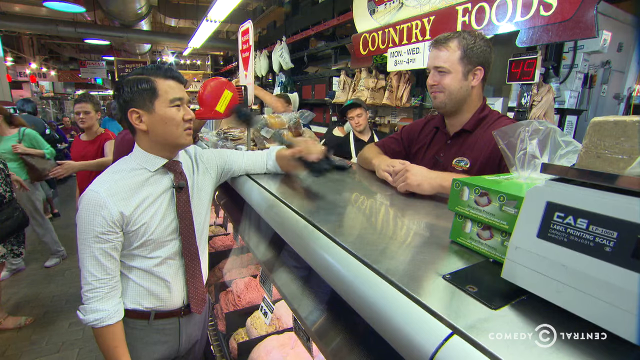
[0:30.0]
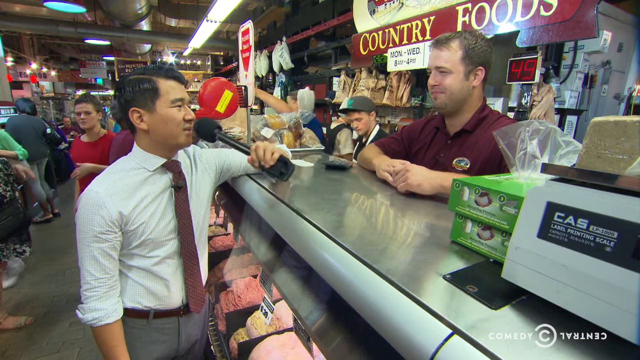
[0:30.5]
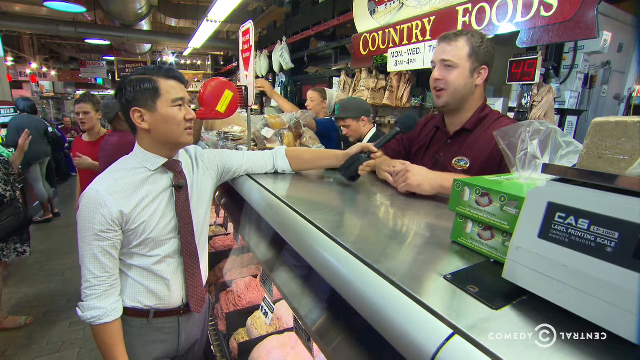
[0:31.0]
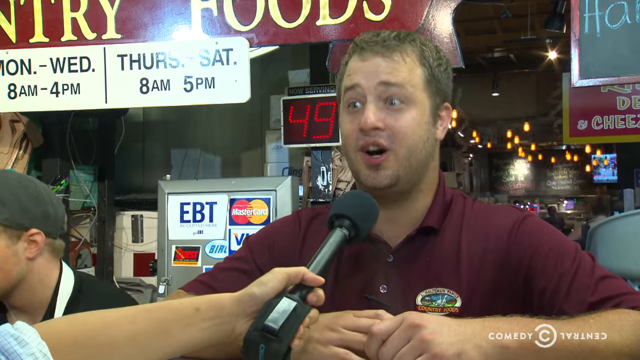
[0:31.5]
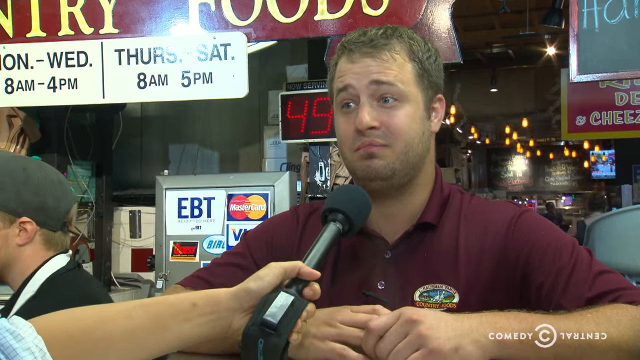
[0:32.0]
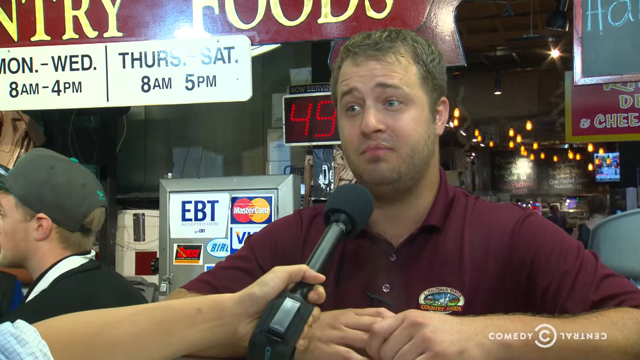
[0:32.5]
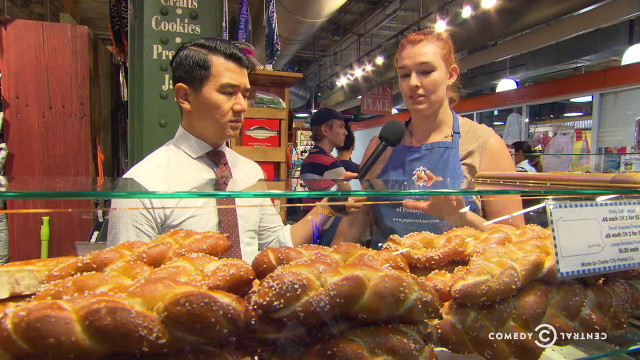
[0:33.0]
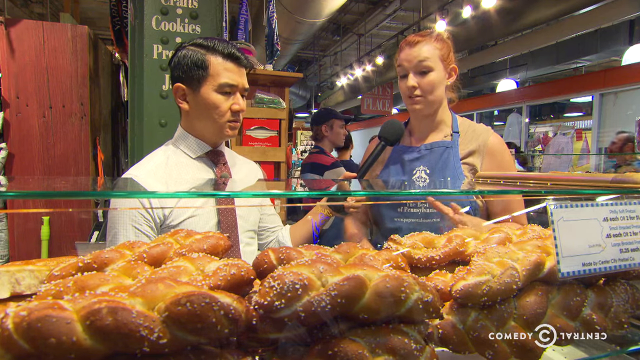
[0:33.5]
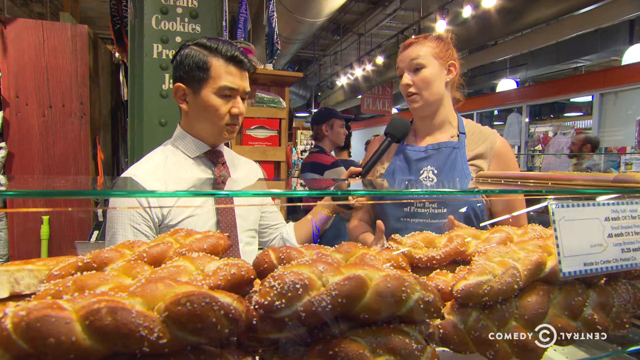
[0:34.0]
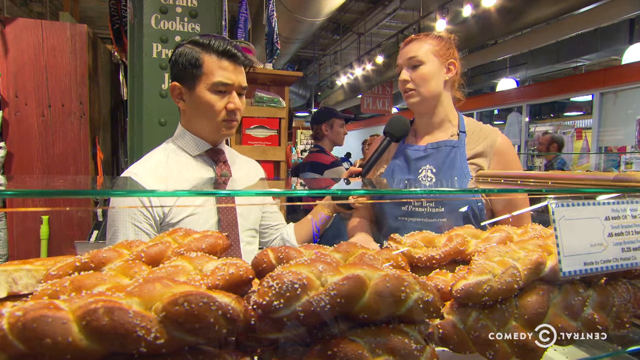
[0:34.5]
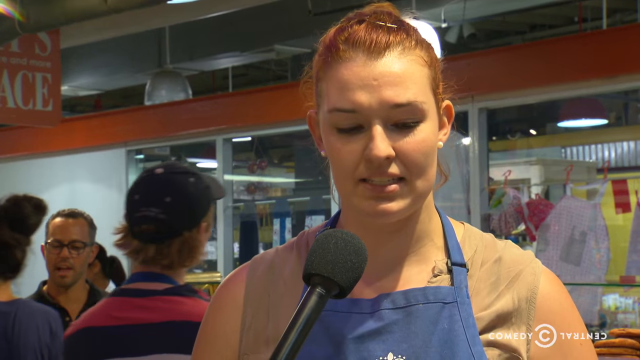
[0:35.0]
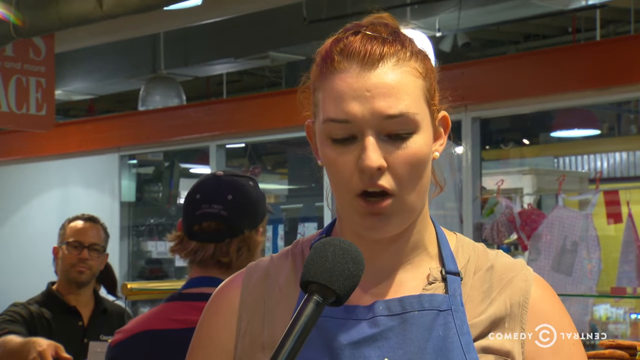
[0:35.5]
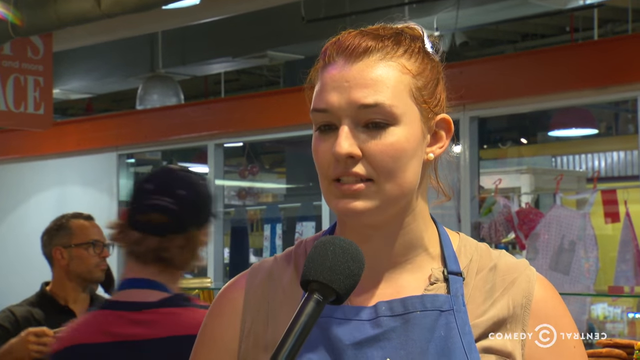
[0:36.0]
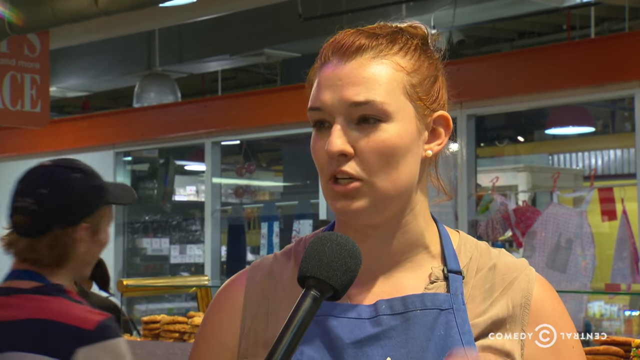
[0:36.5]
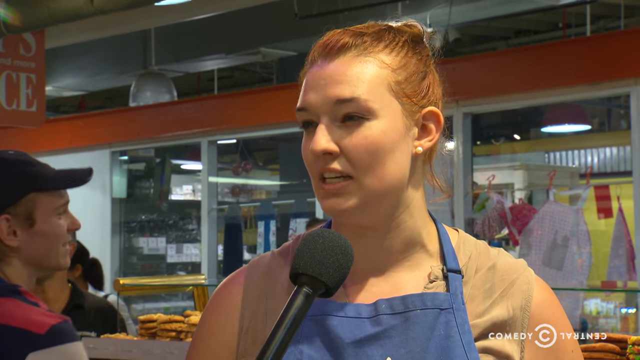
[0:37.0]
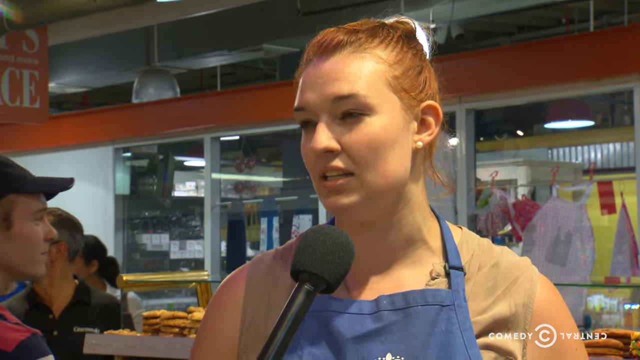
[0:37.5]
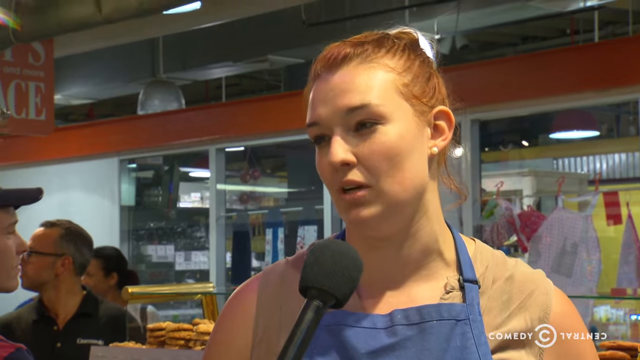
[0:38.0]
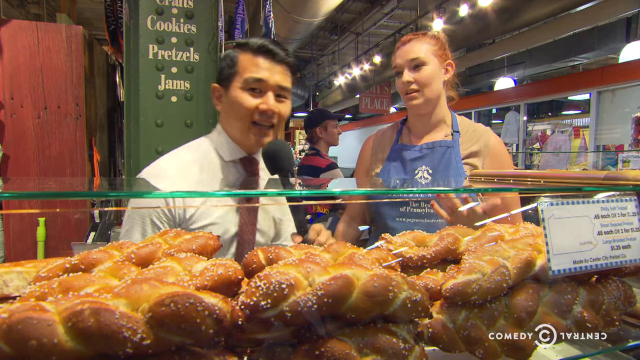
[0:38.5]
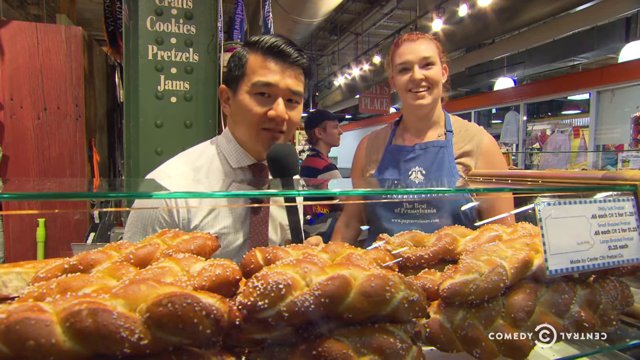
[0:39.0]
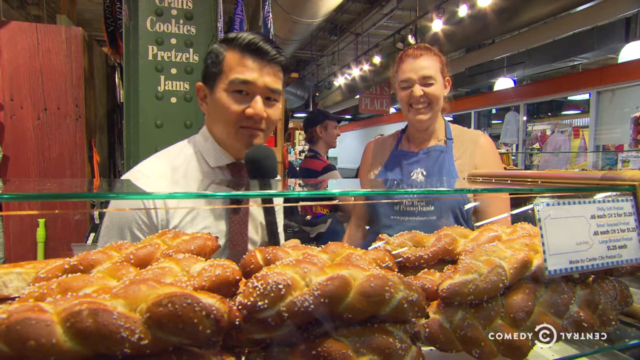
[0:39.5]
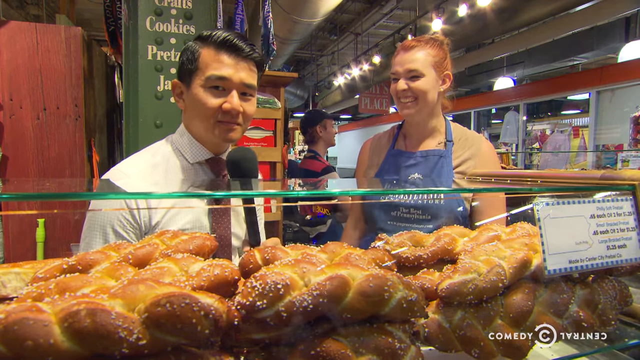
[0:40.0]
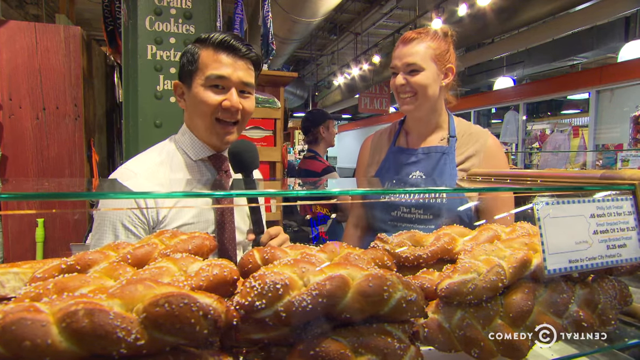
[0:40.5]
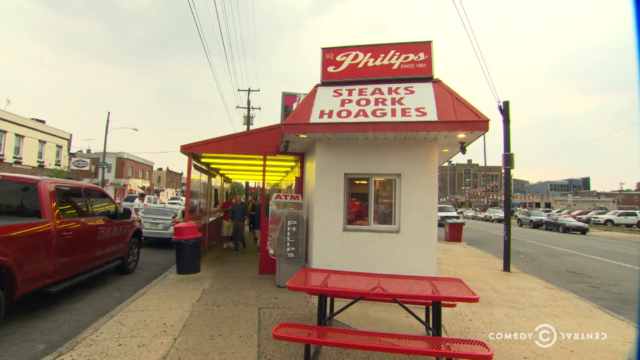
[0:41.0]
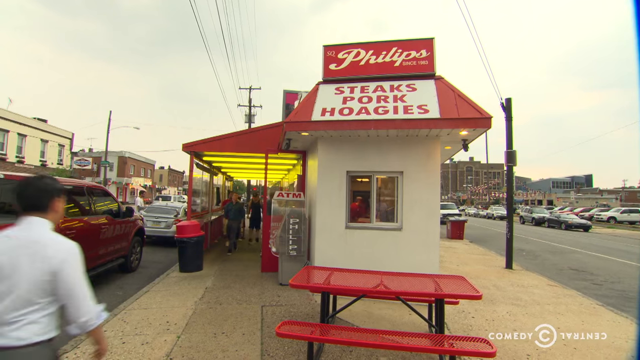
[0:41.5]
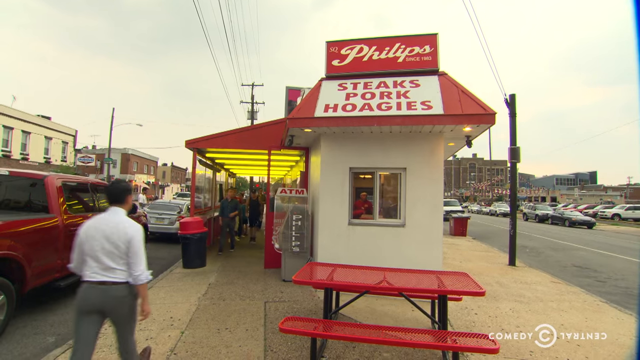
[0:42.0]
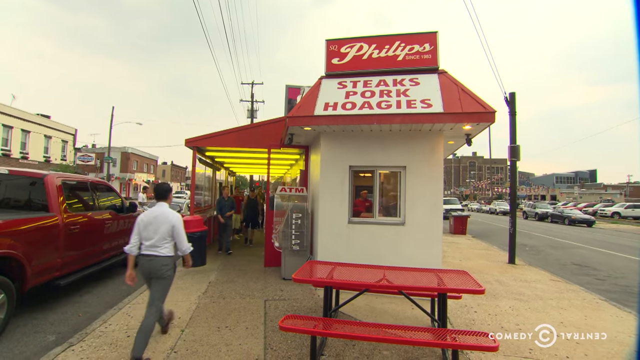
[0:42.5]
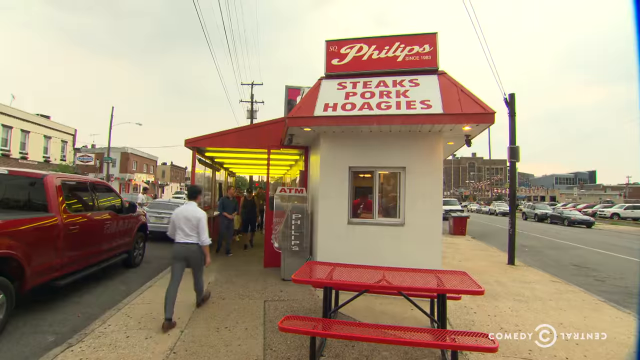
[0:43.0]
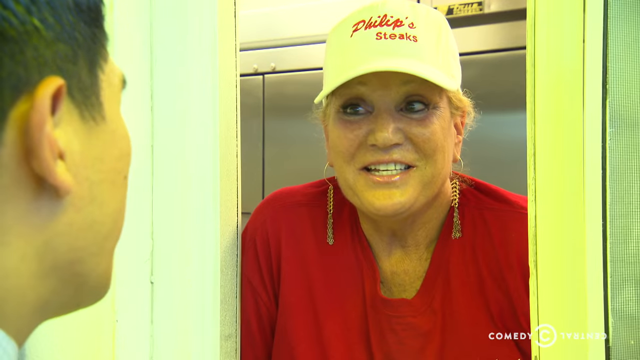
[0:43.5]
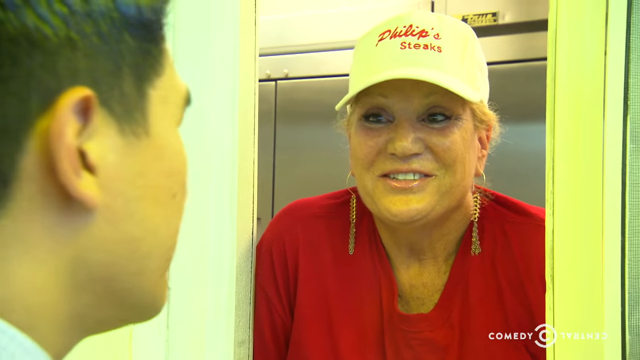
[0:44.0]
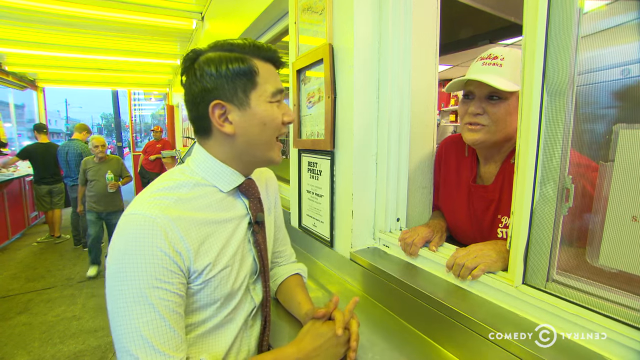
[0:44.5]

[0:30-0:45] An Asian man in his early 30s, a reporter, walks around various locations talking to people. One location is a market, where he stands at a deli counter holding up a microphone and talking to a white man in a maroon polo shirt who works behind the counter. Meats of various sorts are visible in the counter, and the two look like they are having a pleasant exchange. In a bakery area of the same market he talks to a young white woman with red hair wearing a blue apron; they stand in front of a counter of bakery items and look like they are having a pleasant exchange. He also goes to a little shack with "steak pork and hoagies" written inside it, where he talks through a window to an employee, an elderly white woman wearing a visor and a red shirt. The shack's name is Phillips.